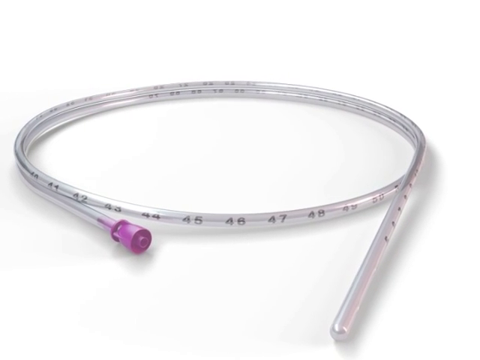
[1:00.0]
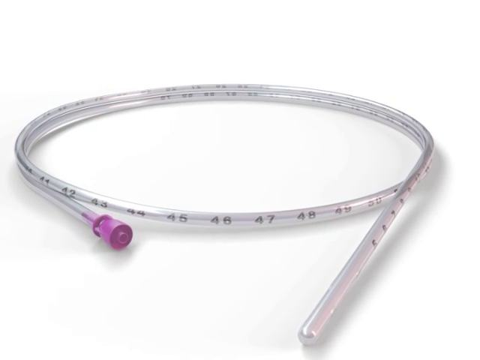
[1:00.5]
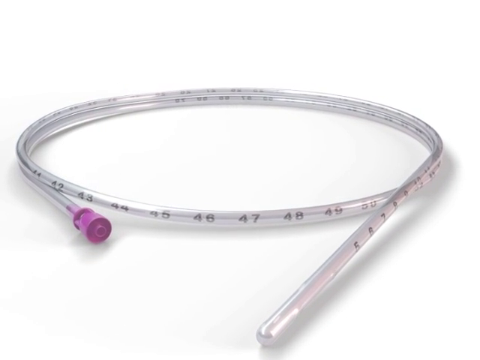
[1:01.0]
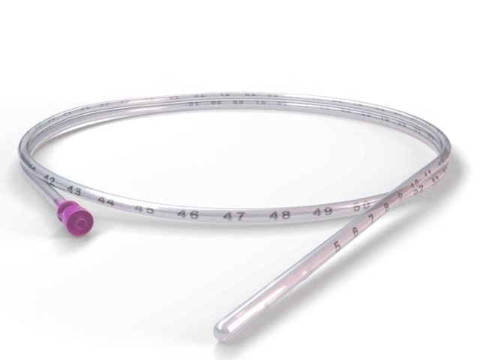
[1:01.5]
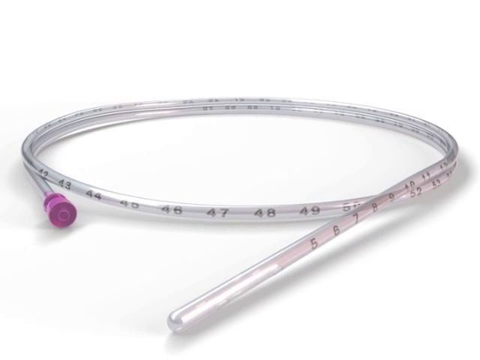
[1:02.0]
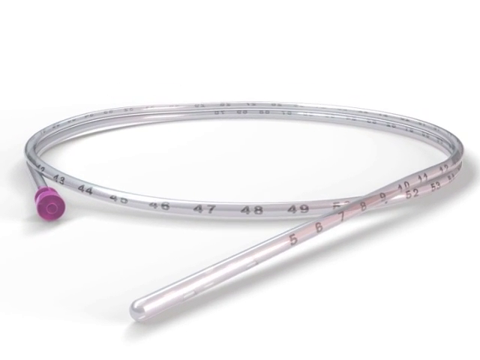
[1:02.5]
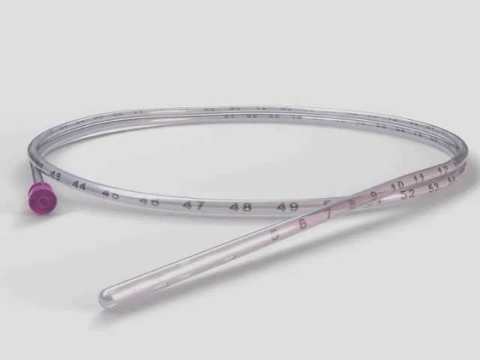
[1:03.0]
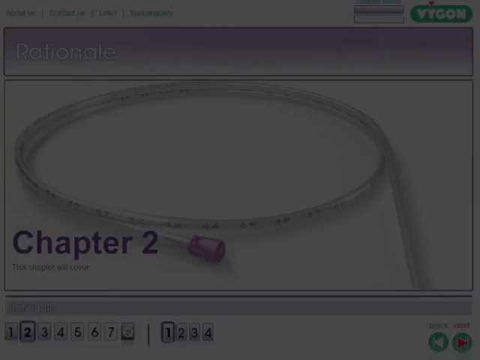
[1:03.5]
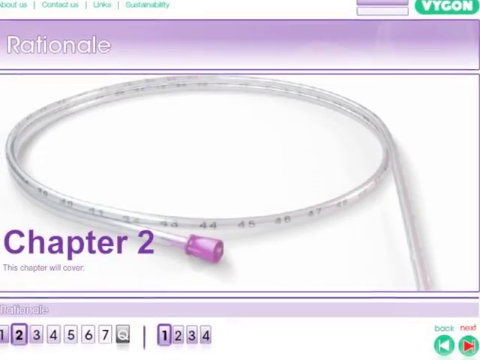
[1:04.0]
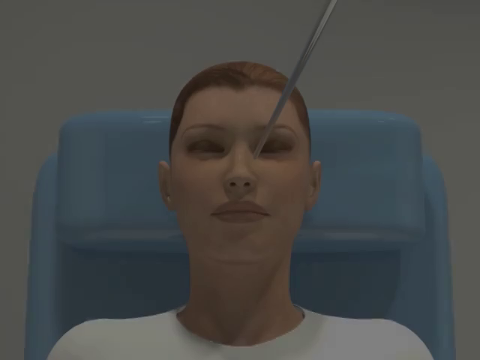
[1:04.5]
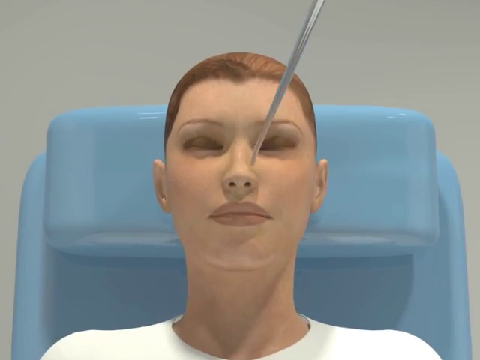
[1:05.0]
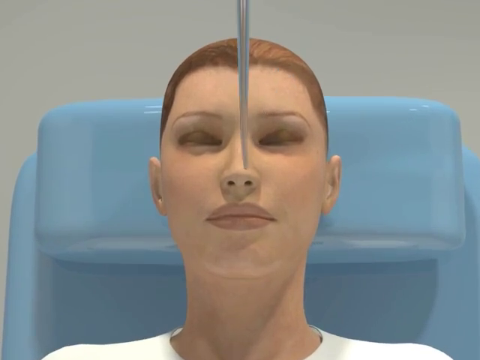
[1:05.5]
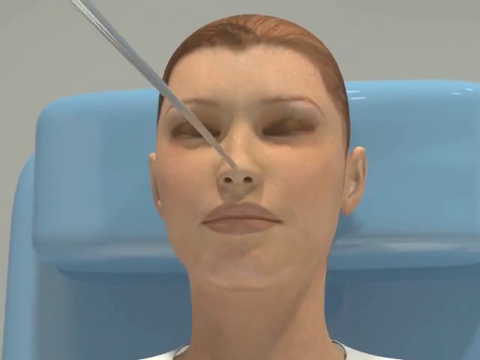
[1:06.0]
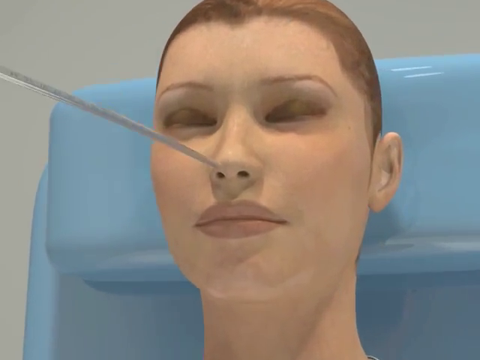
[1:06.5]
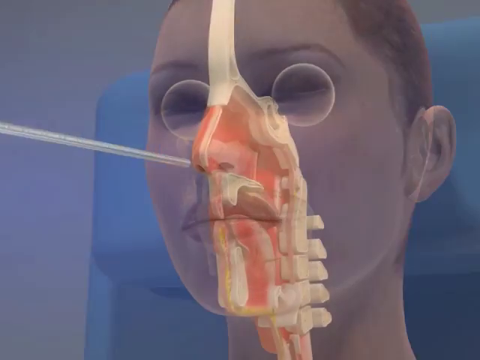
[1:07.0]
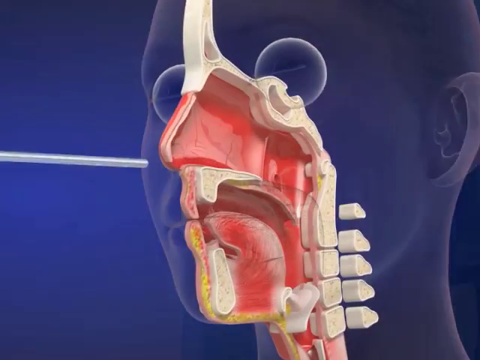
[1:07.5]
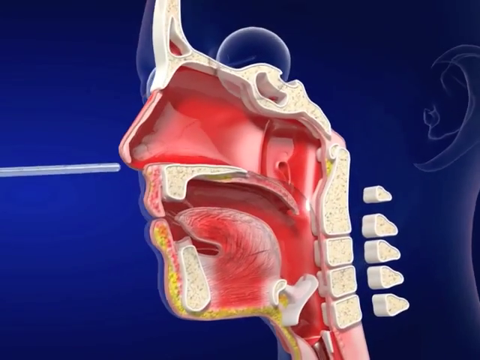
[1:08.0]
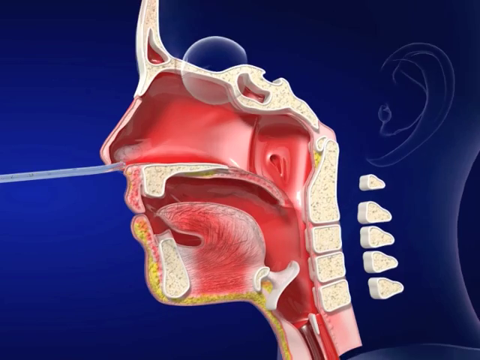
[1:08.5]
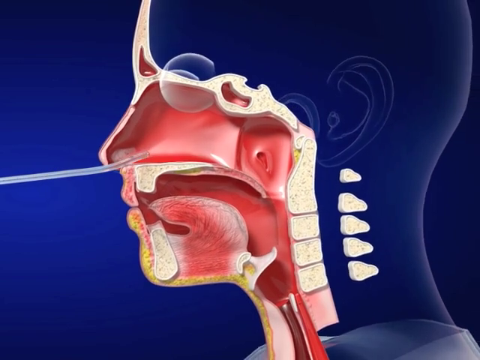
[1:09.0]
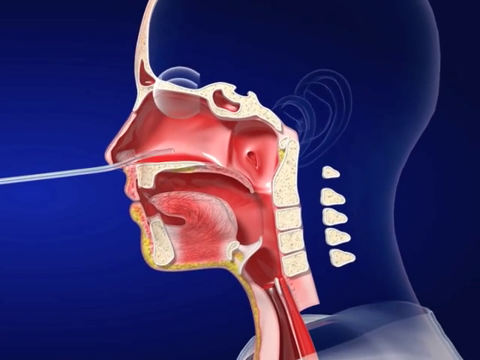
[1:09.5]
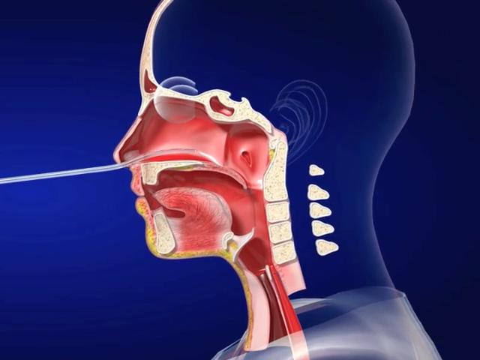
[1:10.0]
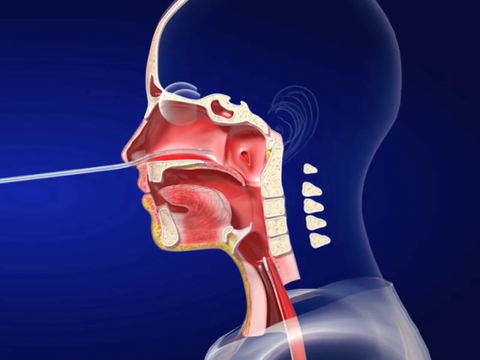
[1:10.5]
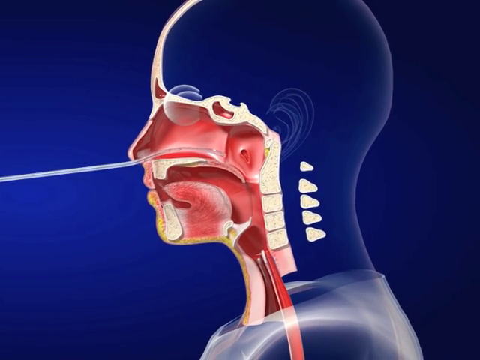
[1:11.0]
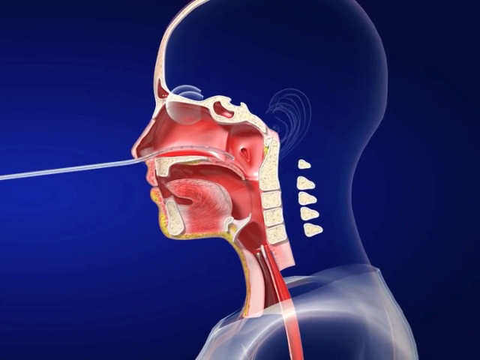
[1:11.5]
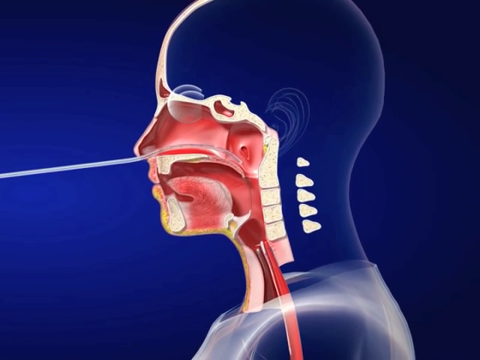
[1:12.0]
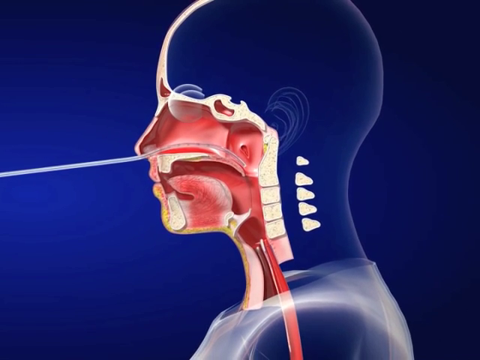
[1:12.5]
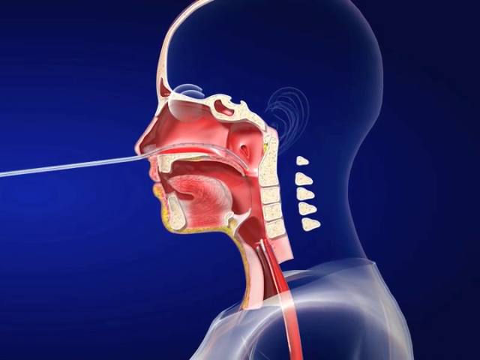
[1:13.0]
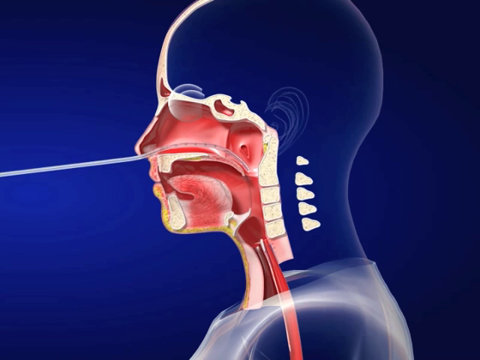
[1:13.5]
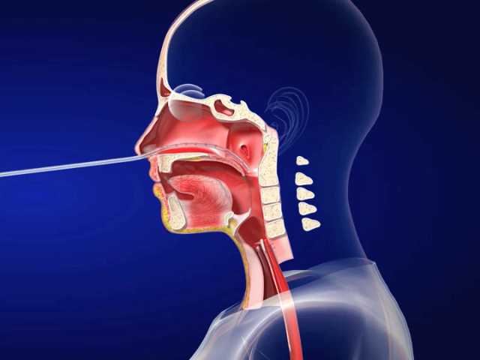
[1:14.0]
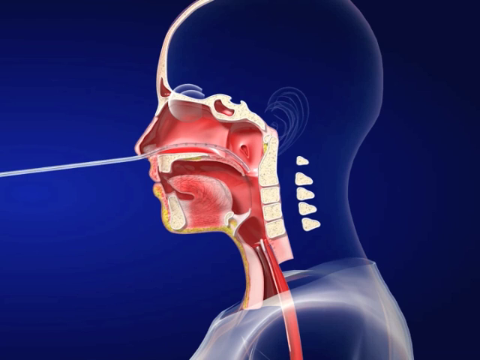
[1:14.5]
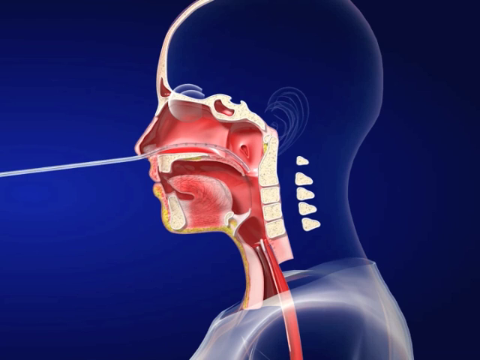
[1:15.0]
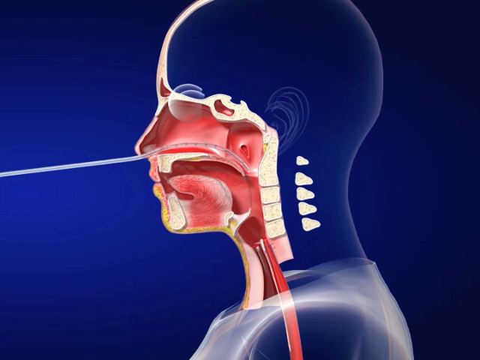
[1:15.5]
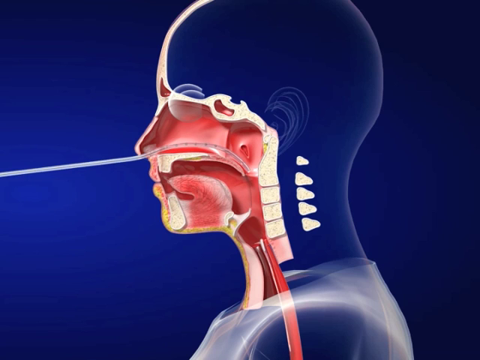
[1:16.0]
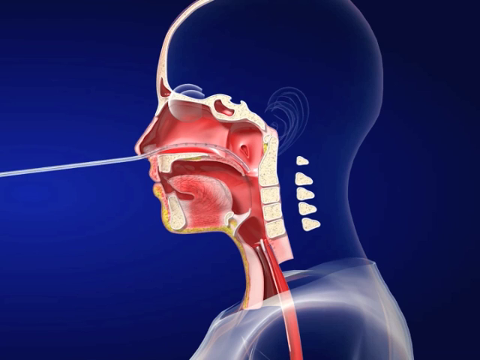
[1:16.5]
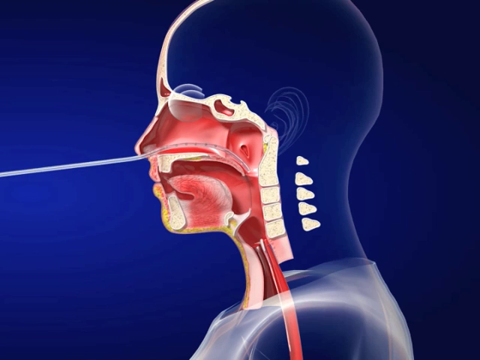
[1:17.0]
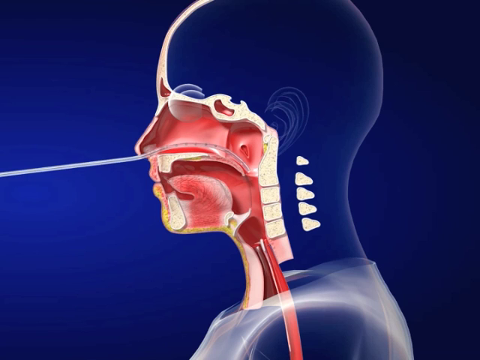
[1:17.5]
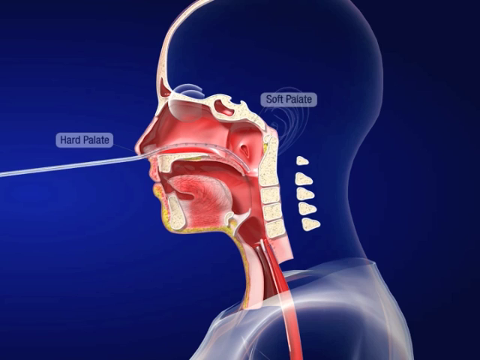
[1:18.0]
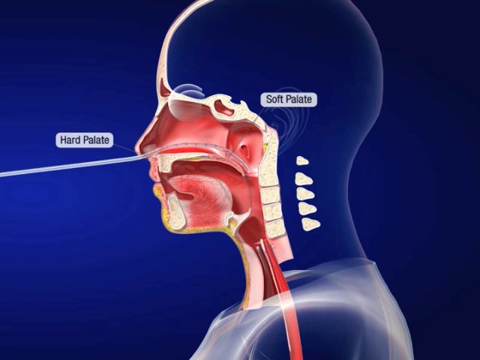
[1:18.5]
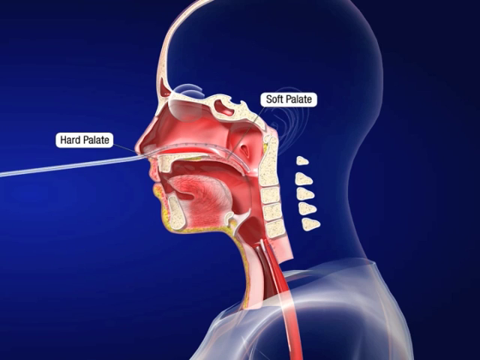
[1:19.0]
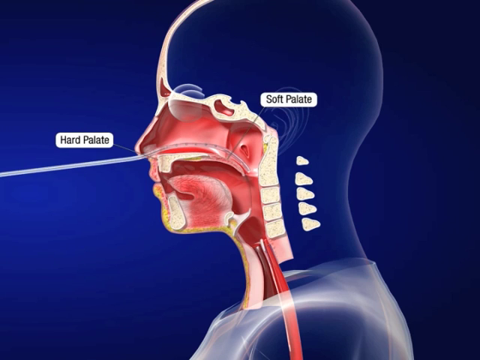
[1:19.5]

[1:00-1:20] A clear medical tube lies coiled up on a white background, with a pinkish-purple, plastic-looking tip on the end that looks like the lid of an Expo marker. The image rotates to the left. The view pans to a training module with a picture of the coiled tube and the text "Chapter 2". The patient then appears lying on her back with her eyes closed on a blue rubber bed, the tube extending from the left side of her nose. As the view pans to the left, the background becomes blue and a cross-section of the inside of the patient's nose, mouth, and throat appears. The tube extends into the nose, through the back of the nose, and down through the esophagus. As the video pans out, the tube stops at the top of the throat. Two labels are visible: "hard palate" and "soft palate". The coiled tube on the white background is then shown again.